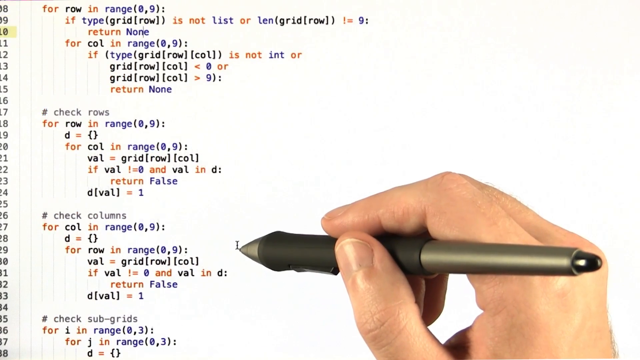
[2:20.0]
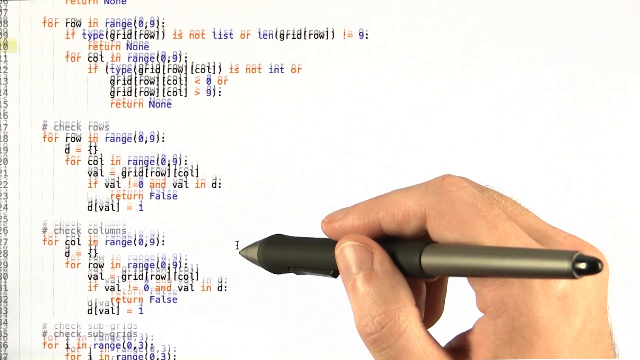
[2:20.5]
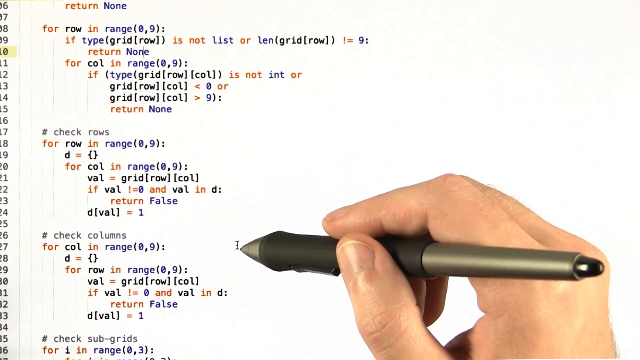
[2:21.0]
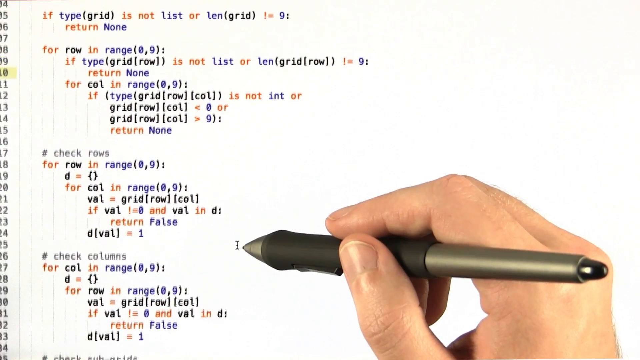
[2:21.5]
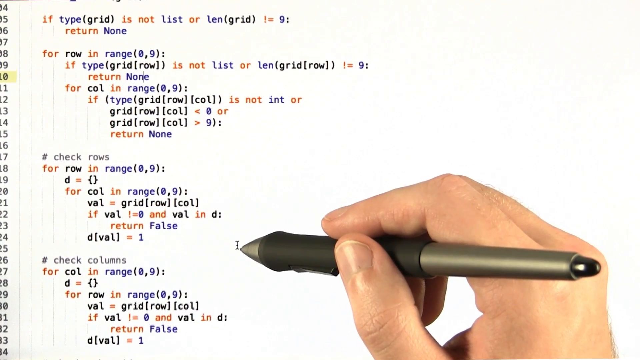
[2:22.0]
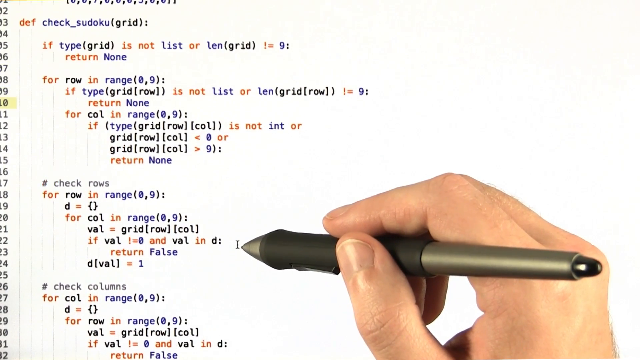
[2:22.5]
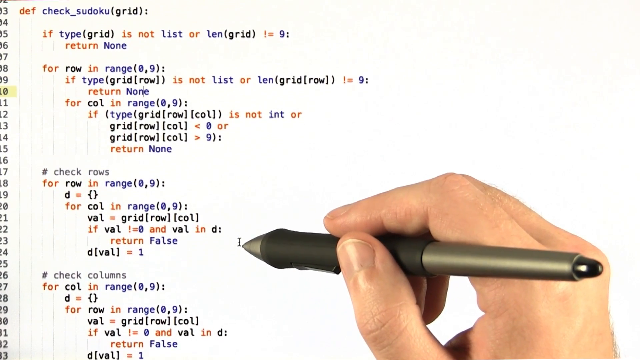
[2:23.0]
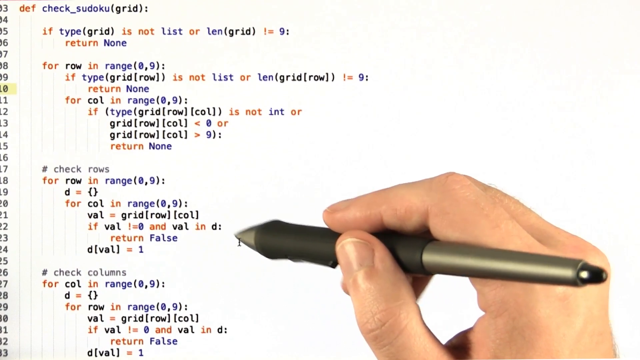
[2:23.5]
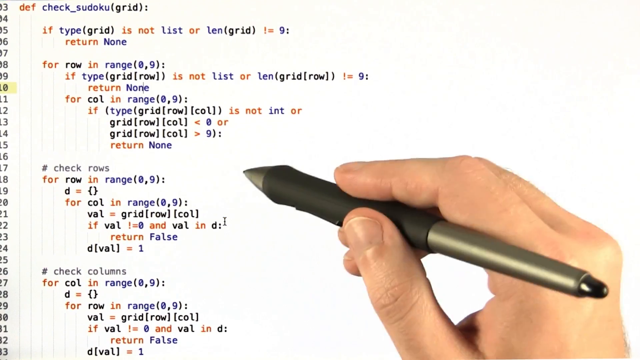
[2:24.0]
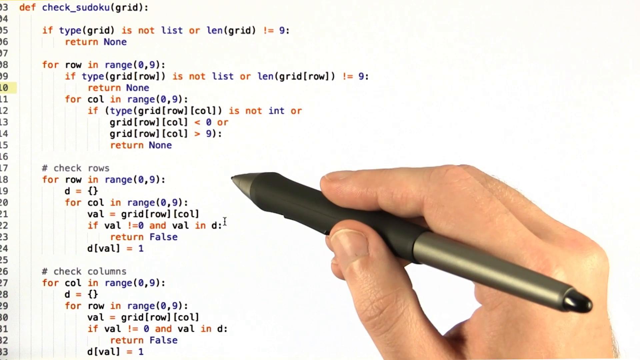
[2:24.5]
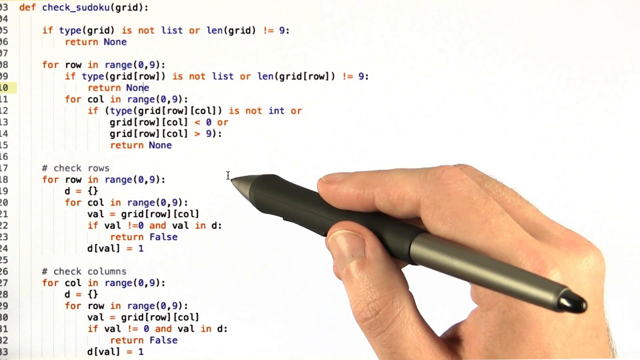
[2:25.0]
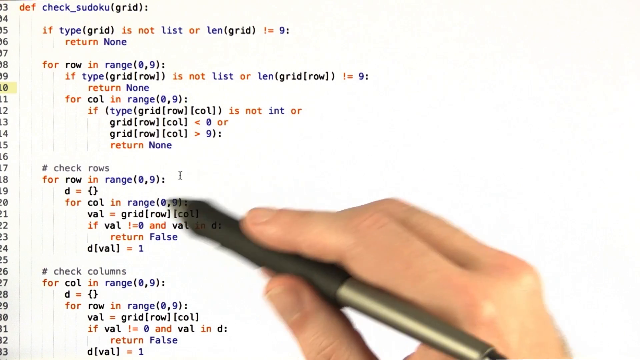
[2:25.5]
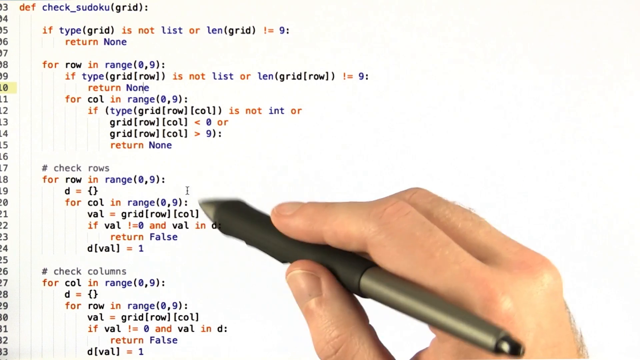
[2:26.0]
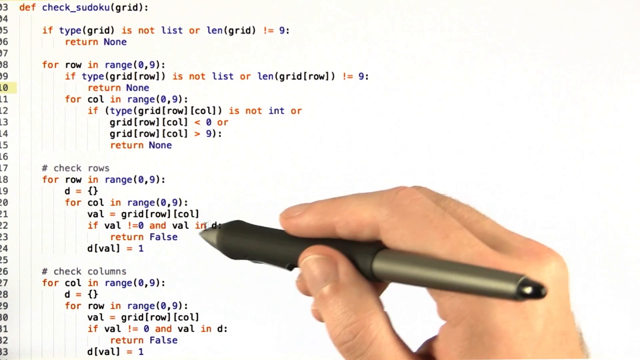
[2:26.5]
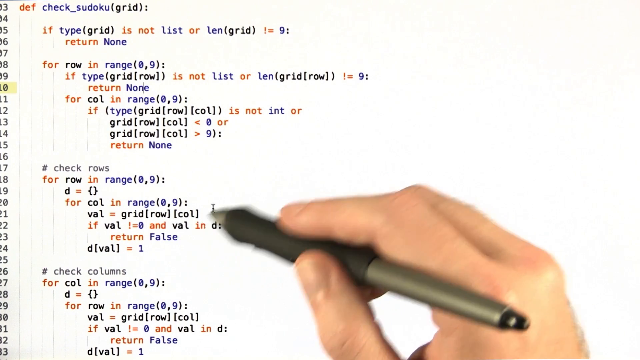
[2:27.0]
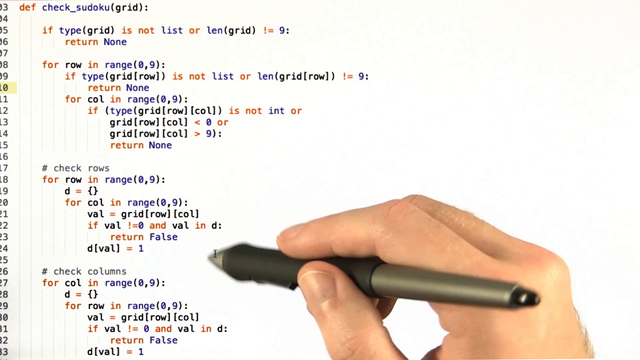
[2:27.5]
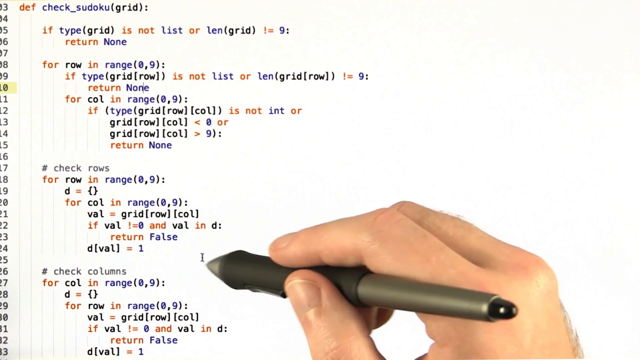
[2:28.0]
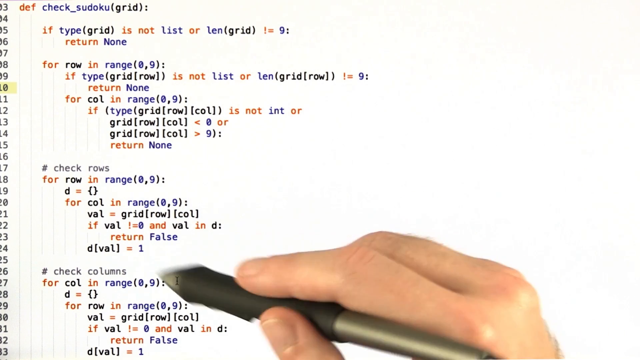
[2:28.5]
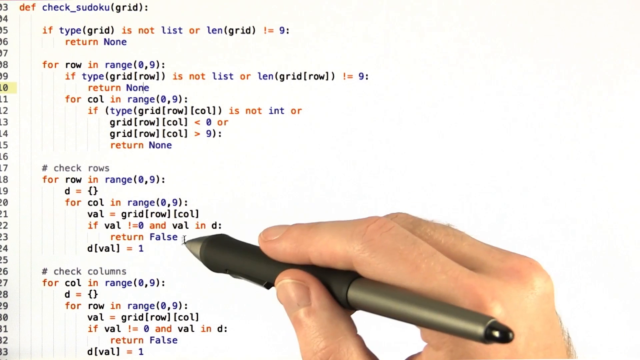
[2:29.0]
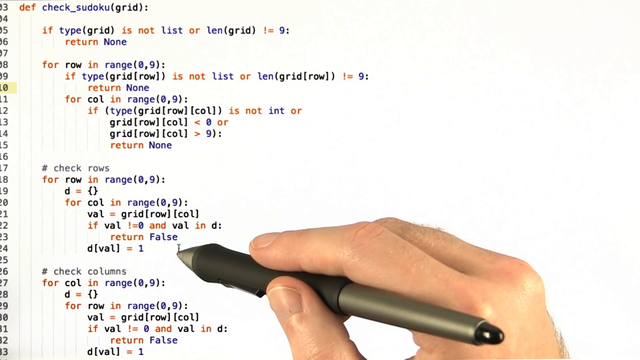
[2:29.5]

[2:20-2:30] A person holds the digital pen in the right hand and scrolls up and down a little at first, moving up the screen before settling on the second section of code, which has a comment that says "check rows". The screen has a white background, a white grid, row numbers on the left and similarly colored code. The person hovers over a couple of lines and circles around the whole second section rather than one line, as if describing it. One row, possibly row 29 or 30, appears to have a yellow highlight, though it is not the part being hovered over.